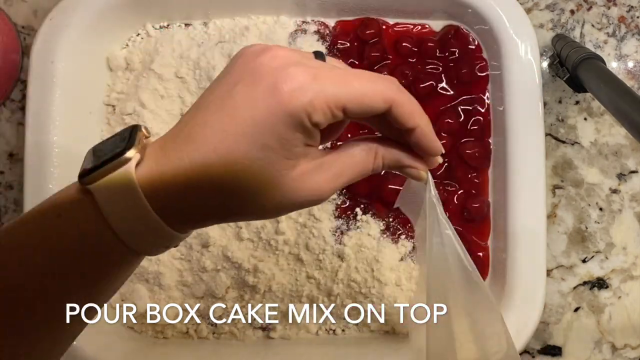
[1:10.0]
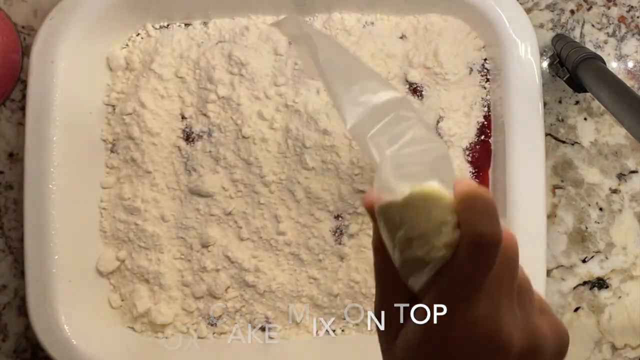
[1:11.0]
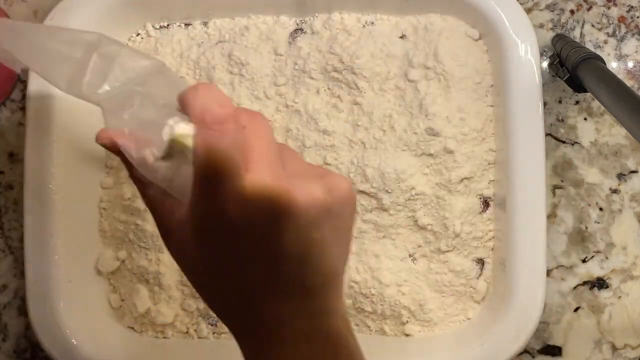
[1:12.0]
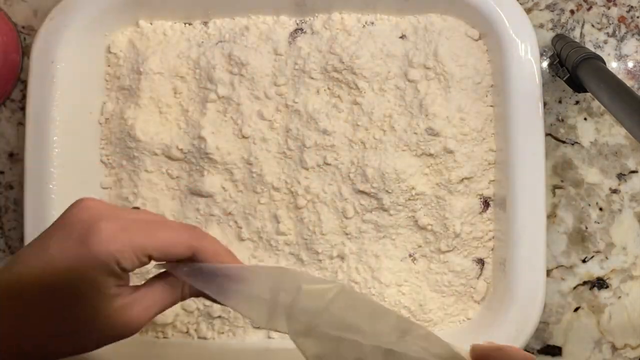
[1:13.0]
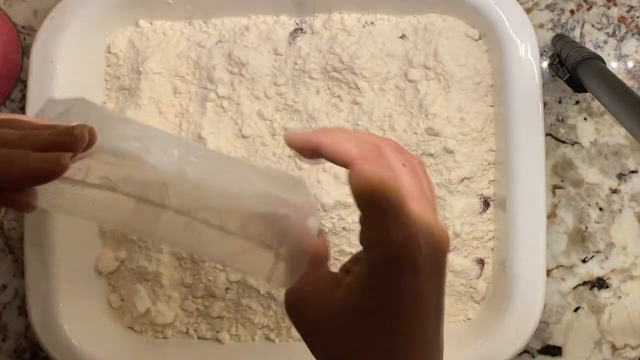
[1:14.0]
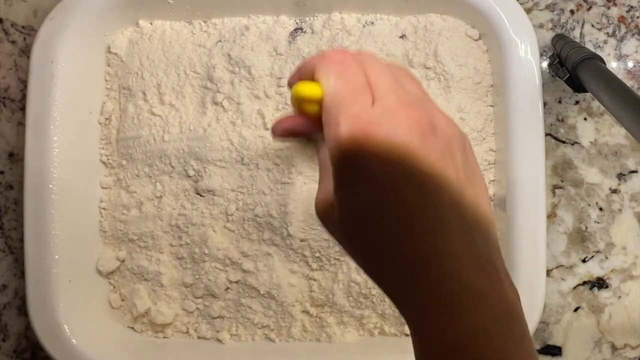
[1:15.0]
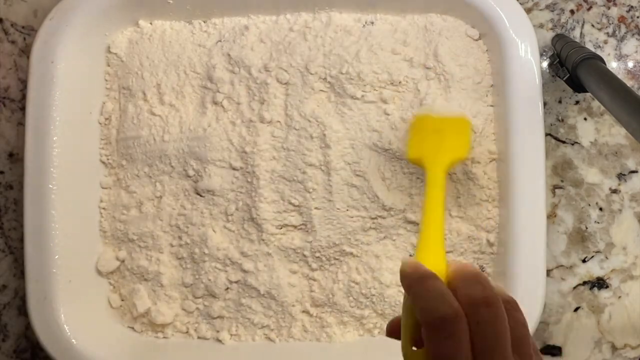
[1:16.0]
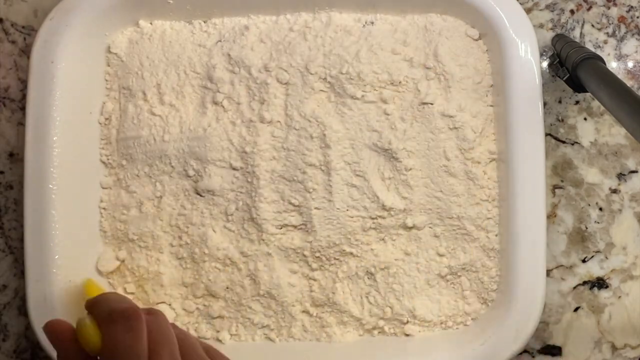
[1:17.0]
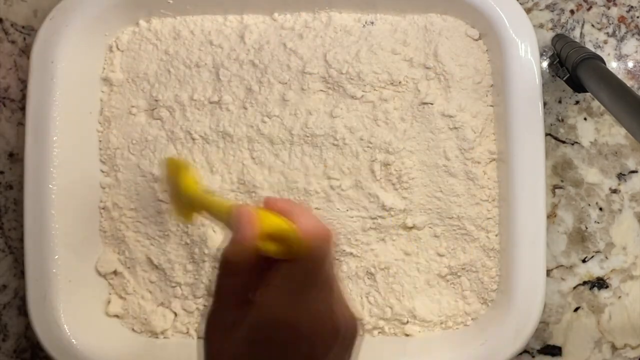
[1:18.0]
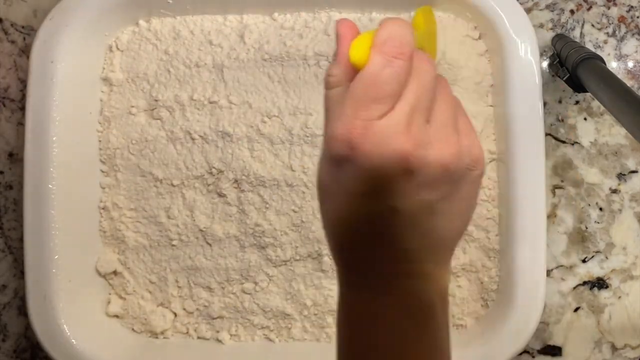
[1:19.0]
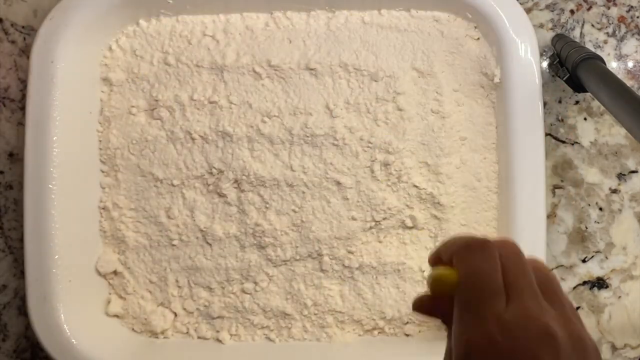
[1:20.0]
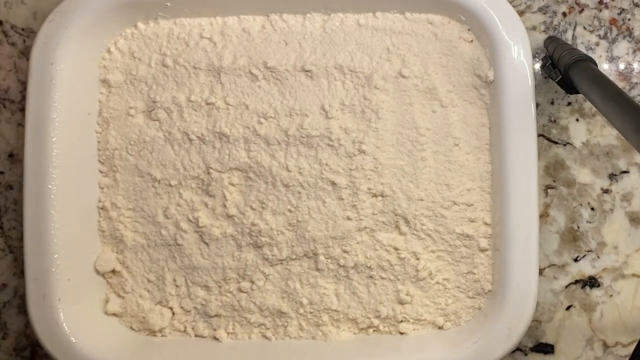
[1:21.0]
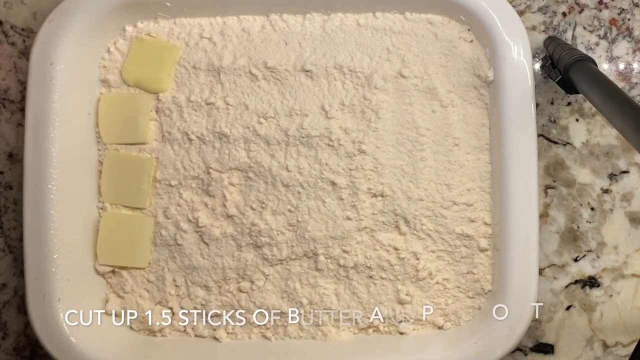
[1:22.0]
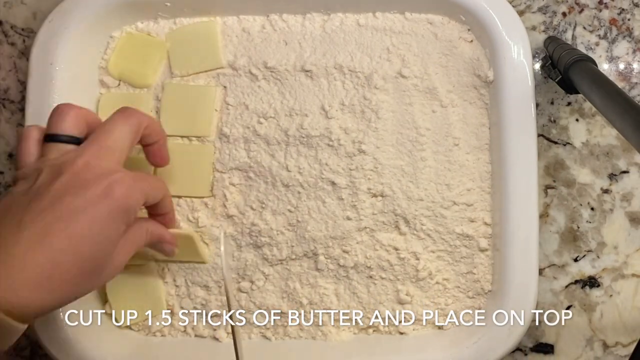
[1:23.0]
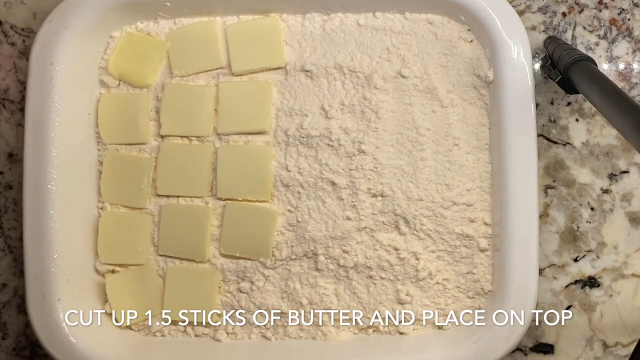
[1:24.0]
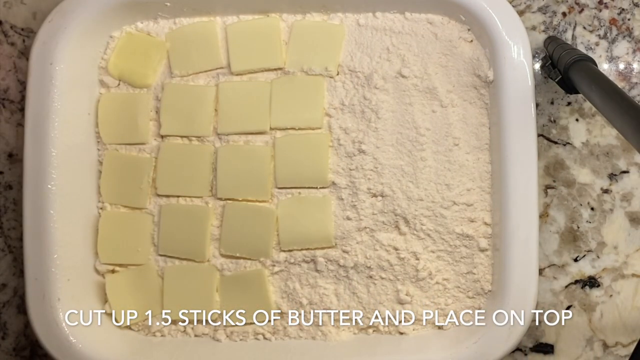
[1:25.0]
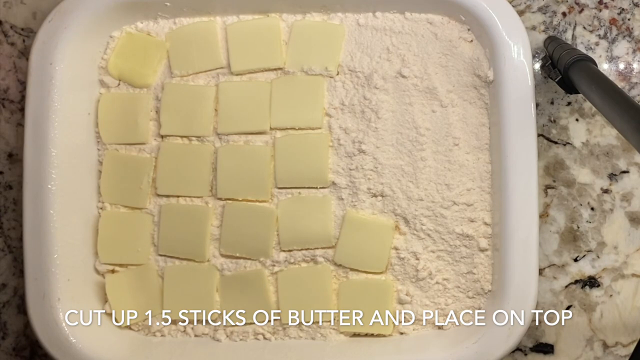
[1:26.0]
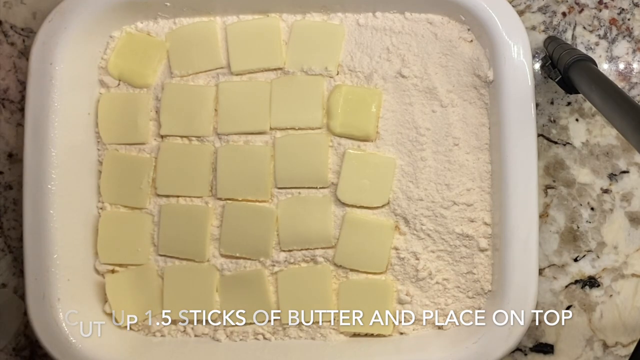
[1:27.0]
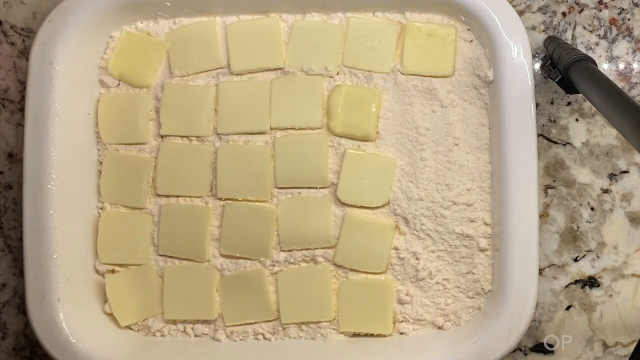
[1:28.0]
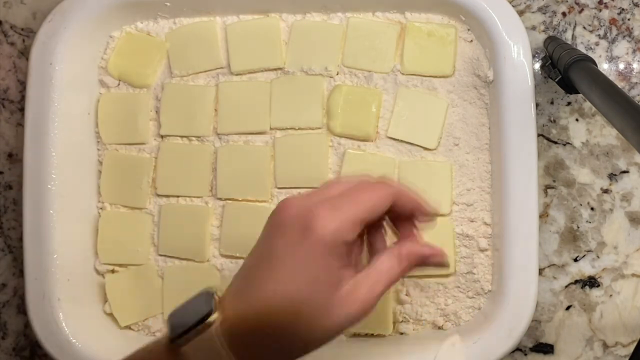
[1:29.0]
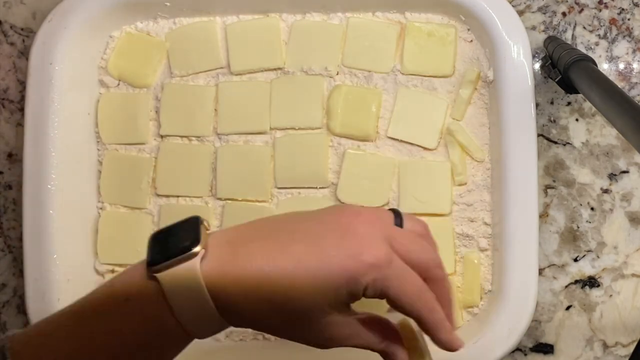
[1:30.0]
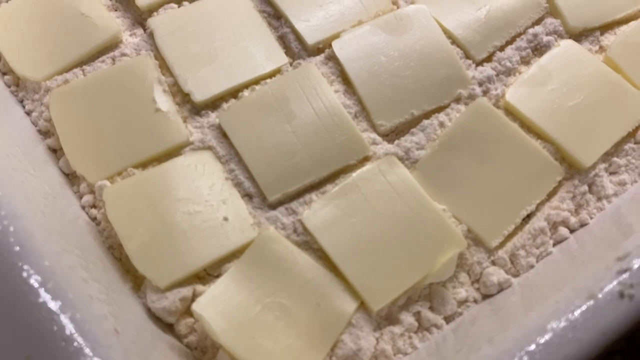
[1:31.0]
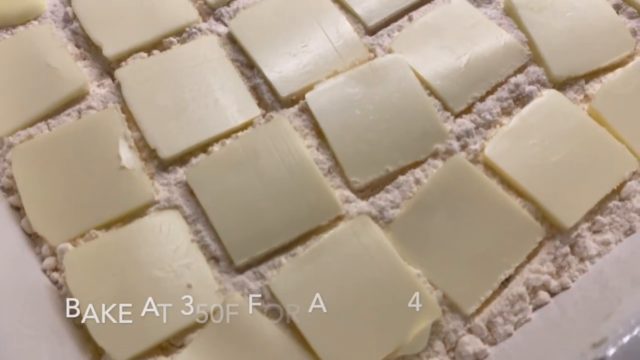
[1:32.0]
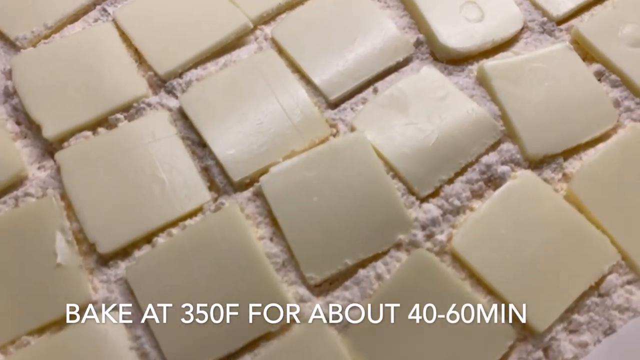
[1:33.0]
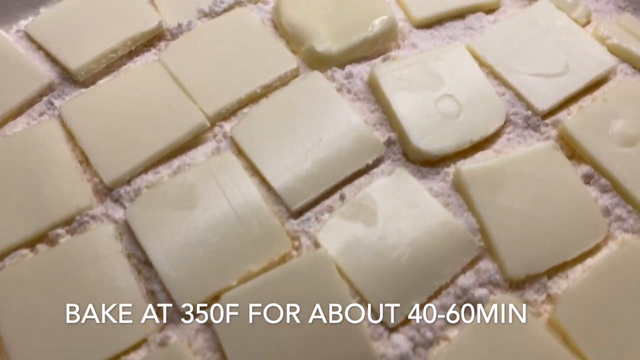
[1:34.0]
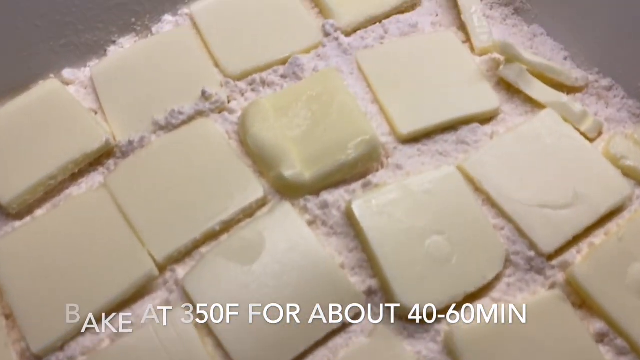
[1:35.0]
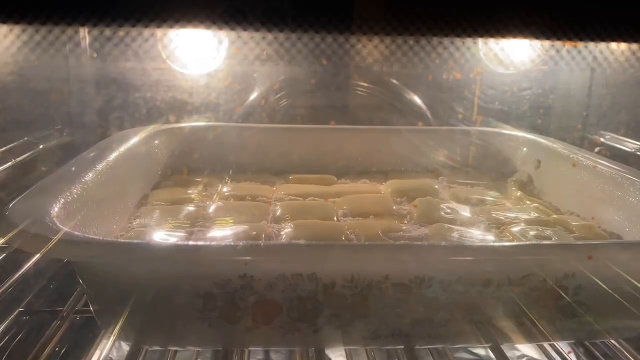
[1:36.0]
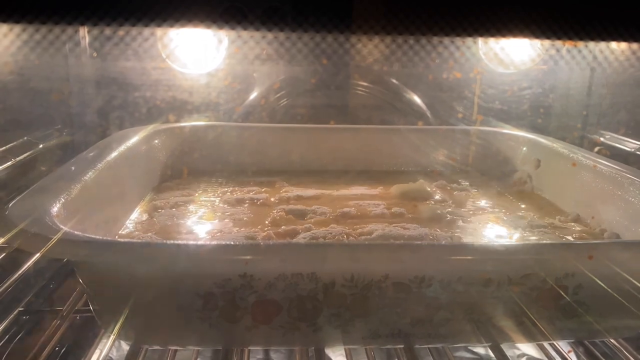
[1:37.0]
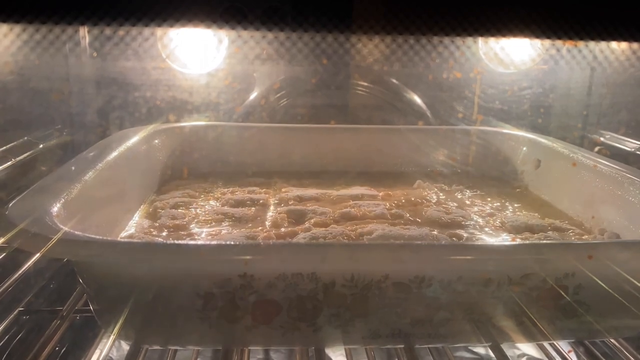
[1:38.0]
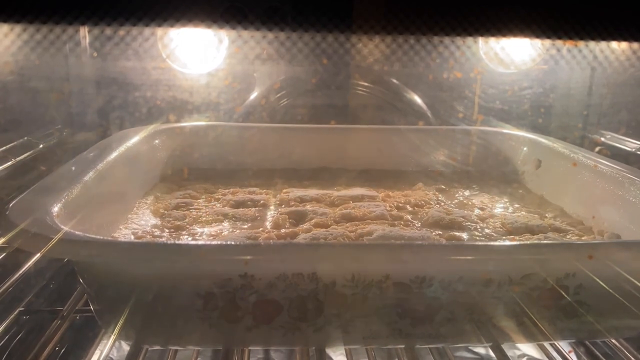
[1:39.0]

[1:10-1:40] A person's hand pours a white powdery mix over a red filling inside a white baking dish. The person completely empties the clear plastic bag and then uses a small yellow spatula to spread the cake mix powder in an even layer in the white ceramic baking dish. The person then layers square-shaped slices of butter on top, covering the entire surface of the powdery mix. The camera pans slowly over the surface, giving a close-up view of all the butter slices. Next, the baking dish is in the oven, and through the oven door the slices of butter melt completely, then slight bubbling begins around the edges of the baking pastry.